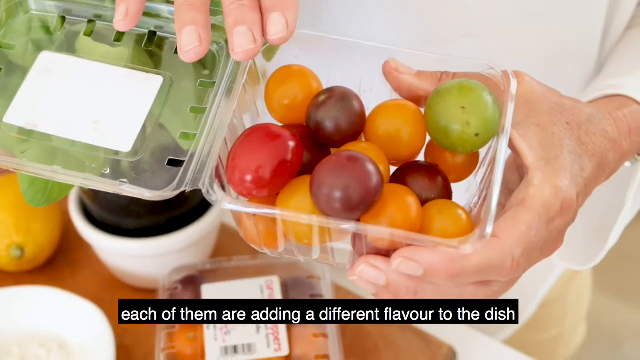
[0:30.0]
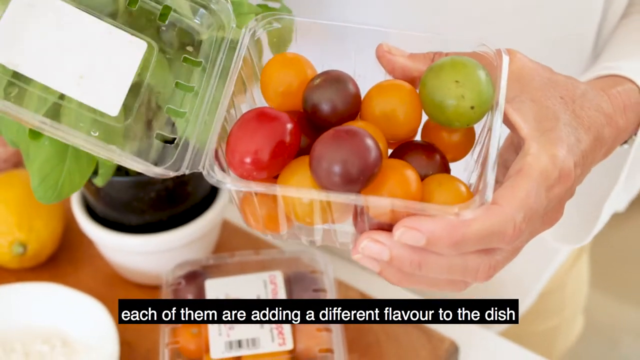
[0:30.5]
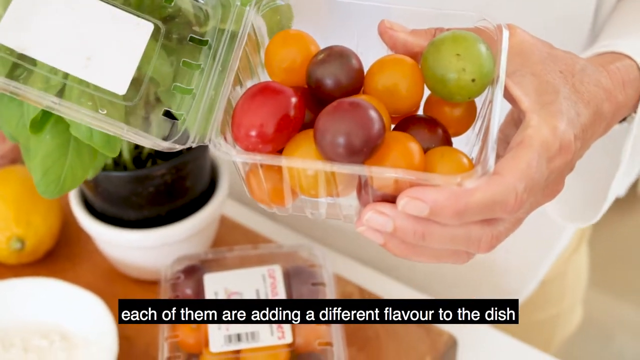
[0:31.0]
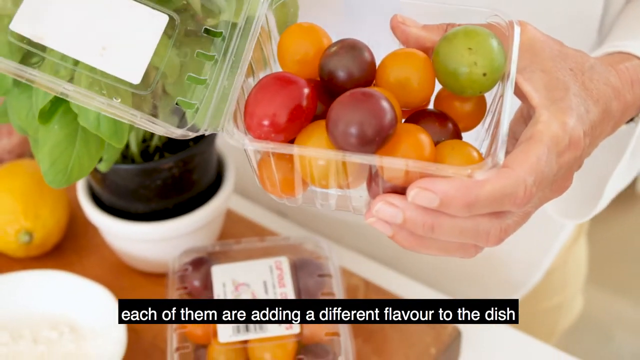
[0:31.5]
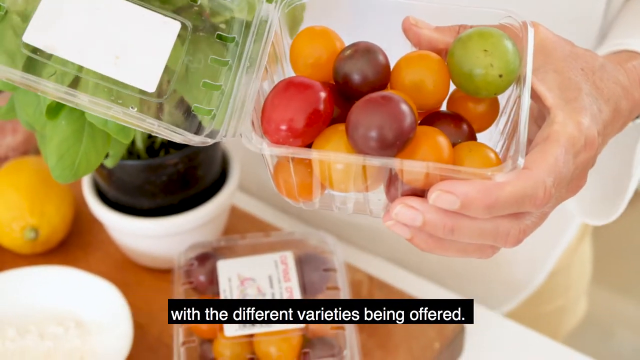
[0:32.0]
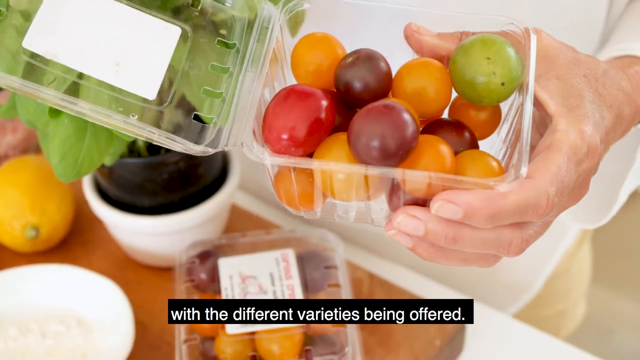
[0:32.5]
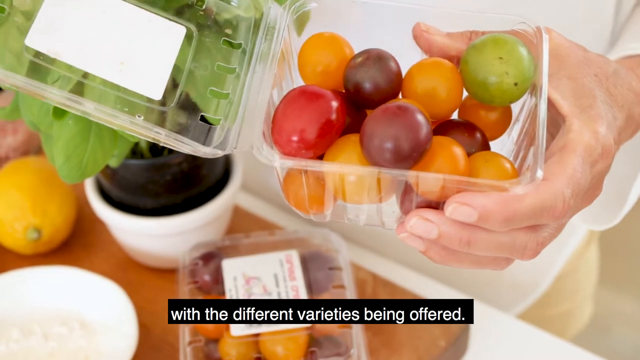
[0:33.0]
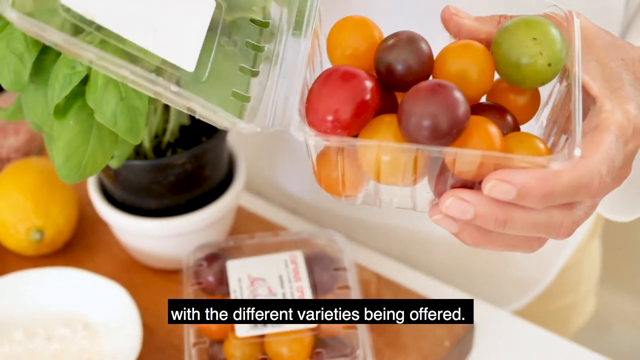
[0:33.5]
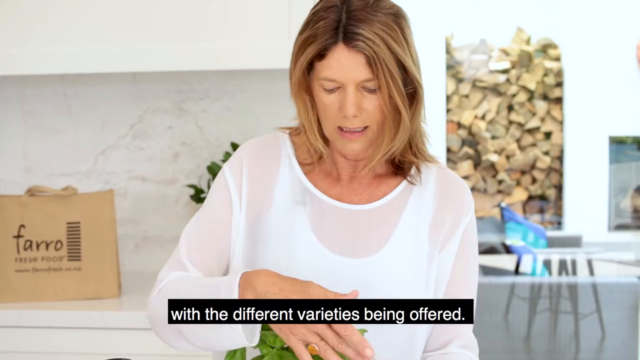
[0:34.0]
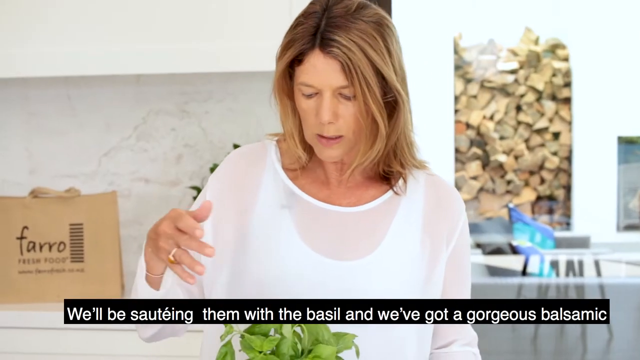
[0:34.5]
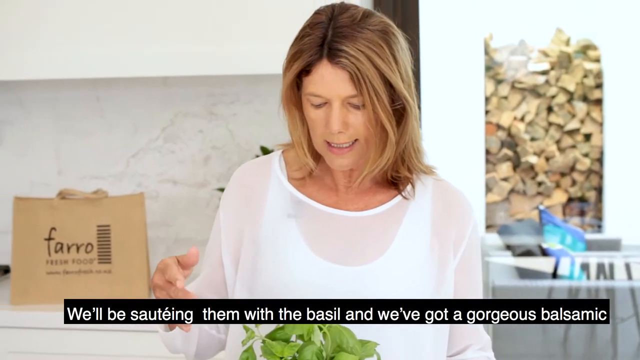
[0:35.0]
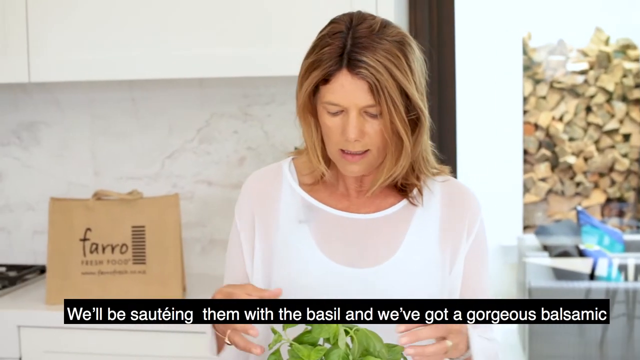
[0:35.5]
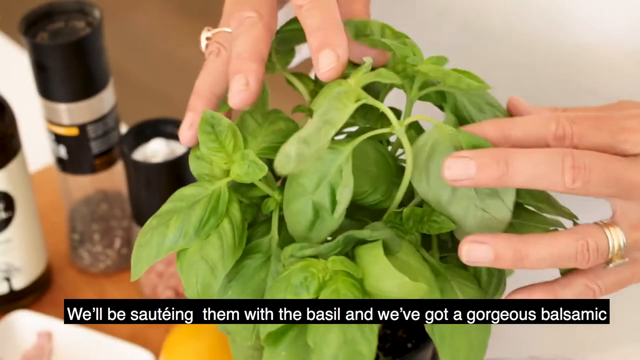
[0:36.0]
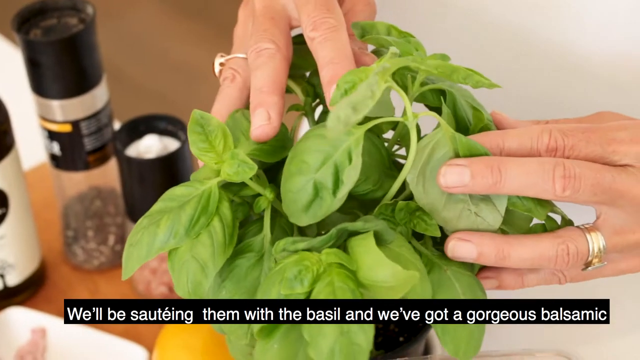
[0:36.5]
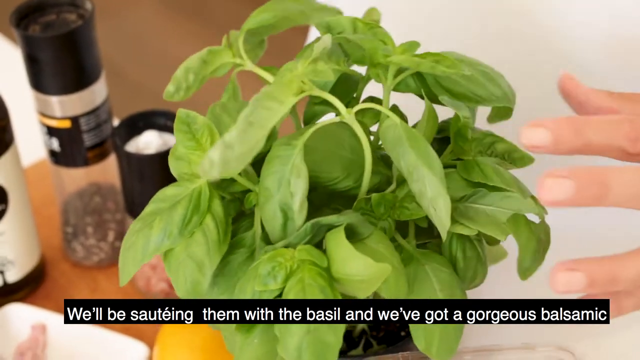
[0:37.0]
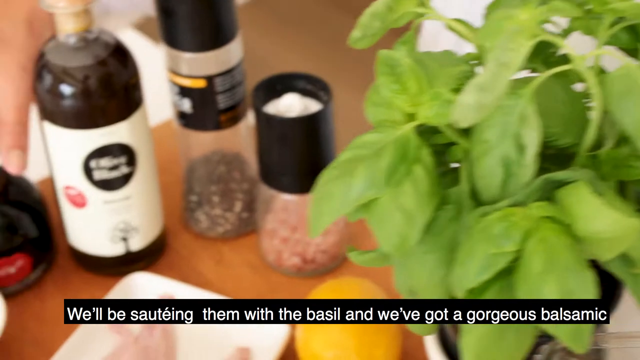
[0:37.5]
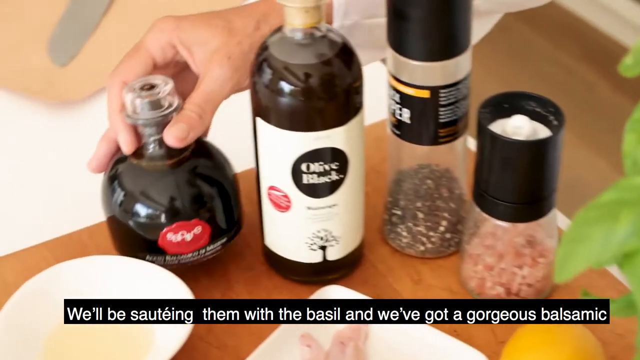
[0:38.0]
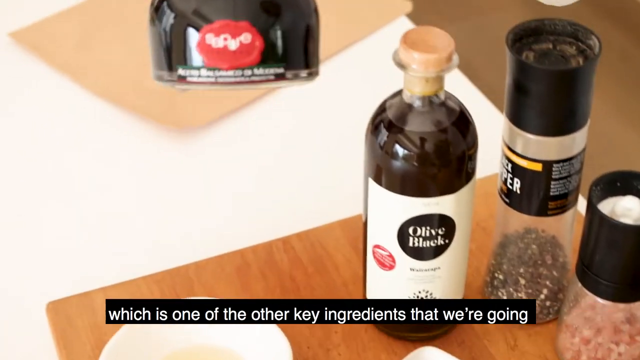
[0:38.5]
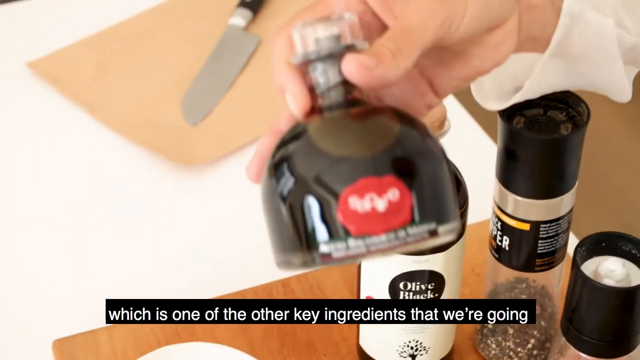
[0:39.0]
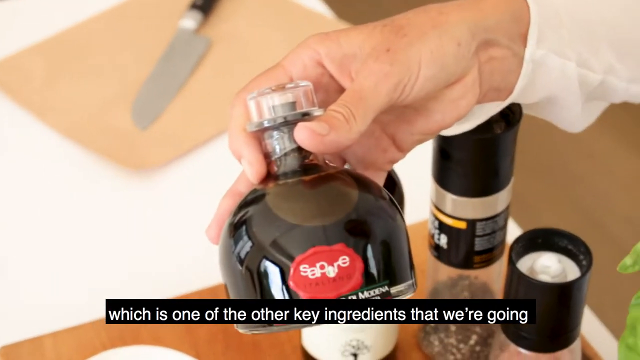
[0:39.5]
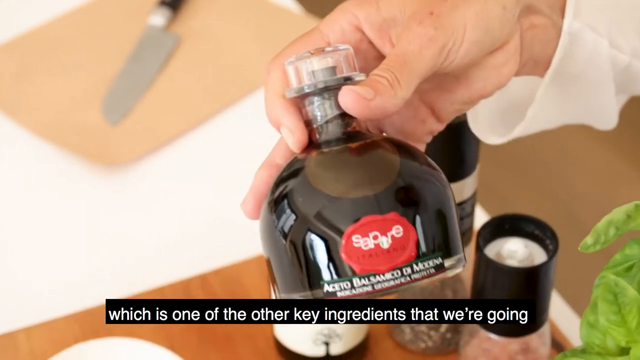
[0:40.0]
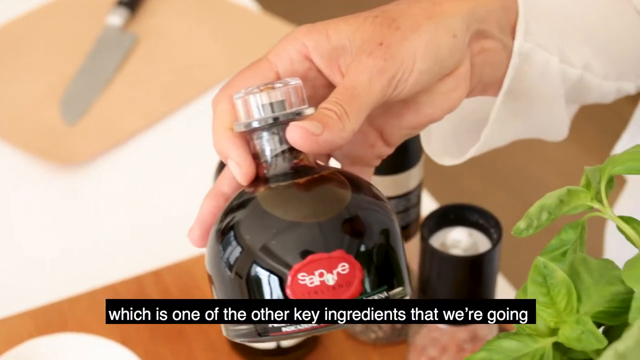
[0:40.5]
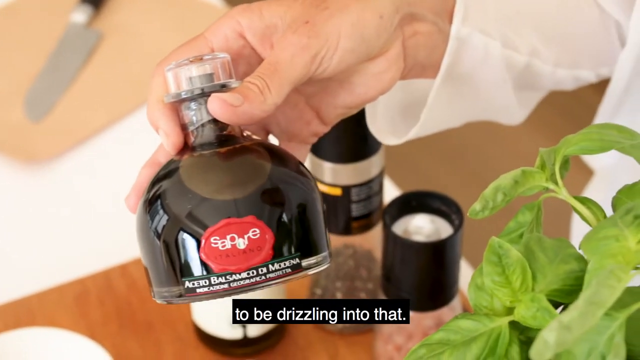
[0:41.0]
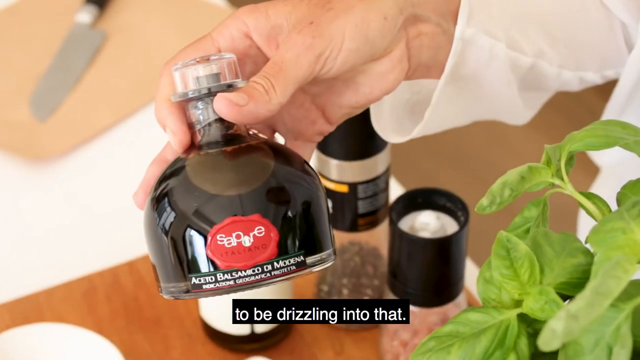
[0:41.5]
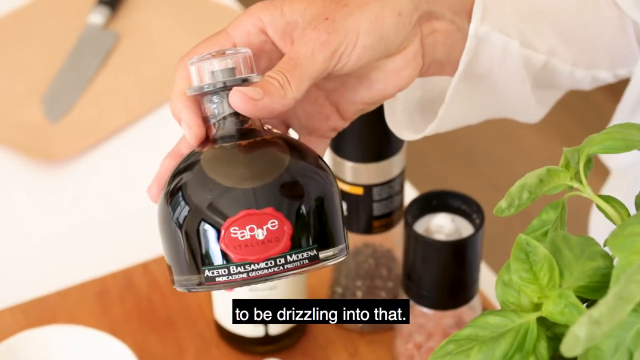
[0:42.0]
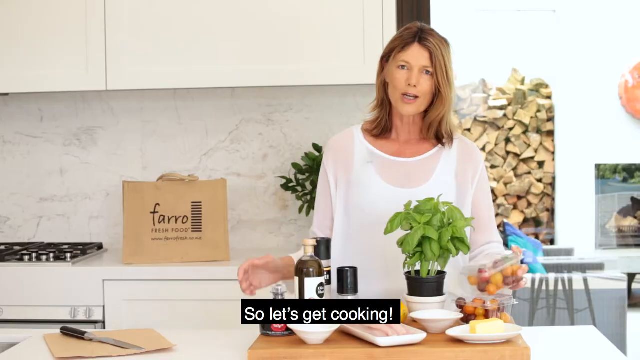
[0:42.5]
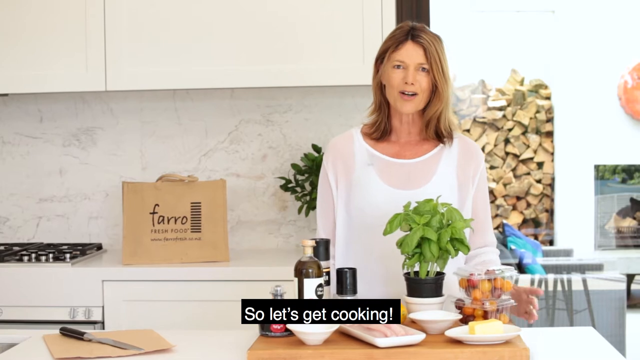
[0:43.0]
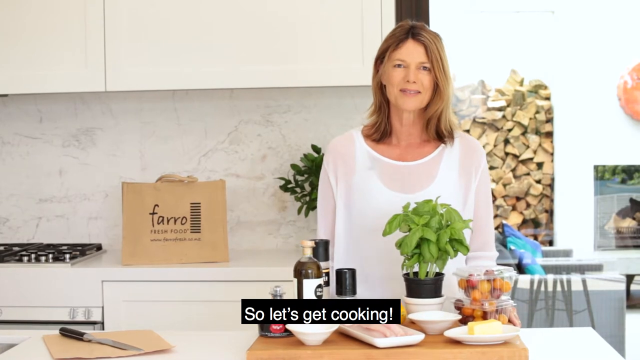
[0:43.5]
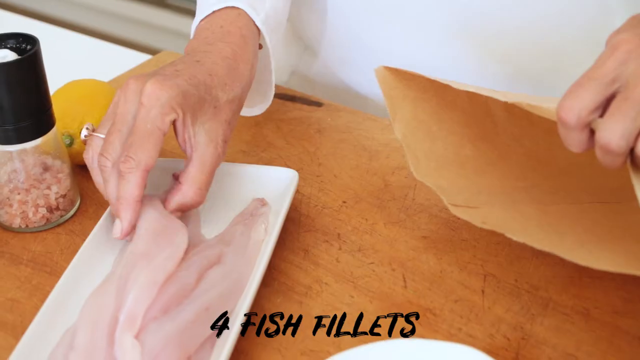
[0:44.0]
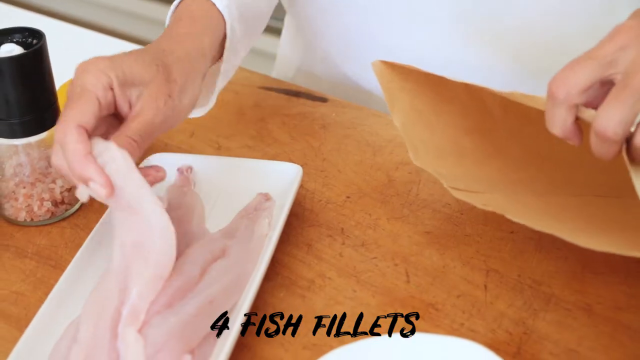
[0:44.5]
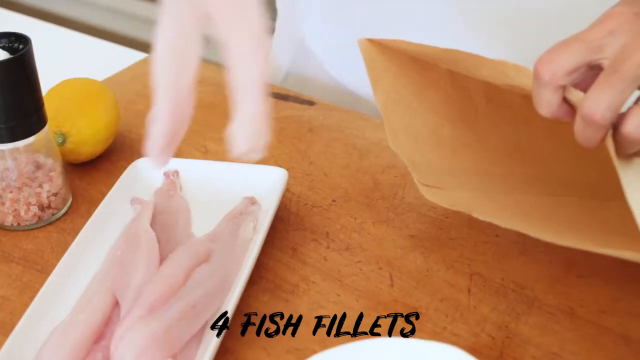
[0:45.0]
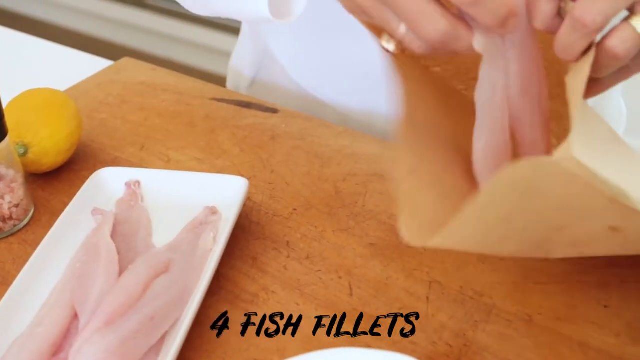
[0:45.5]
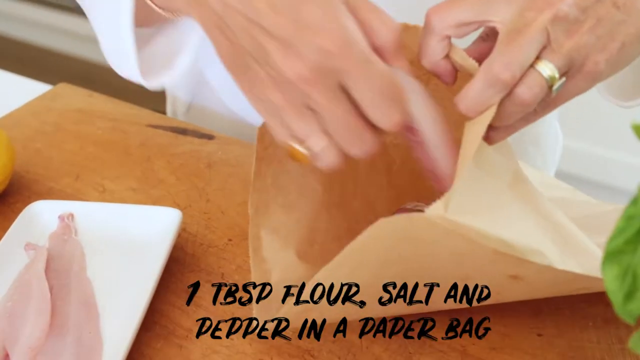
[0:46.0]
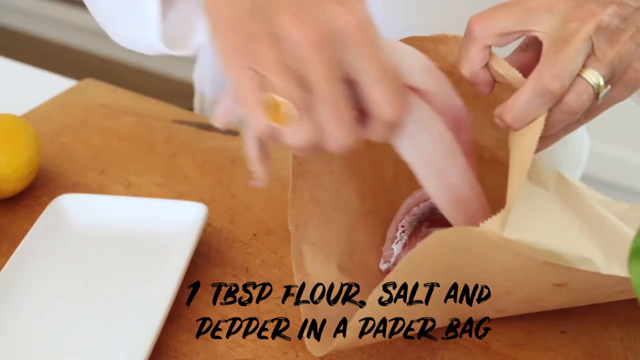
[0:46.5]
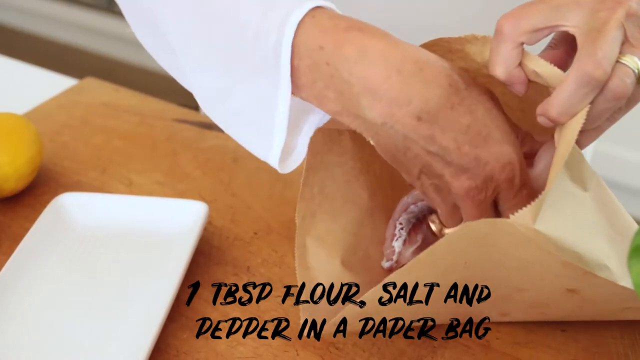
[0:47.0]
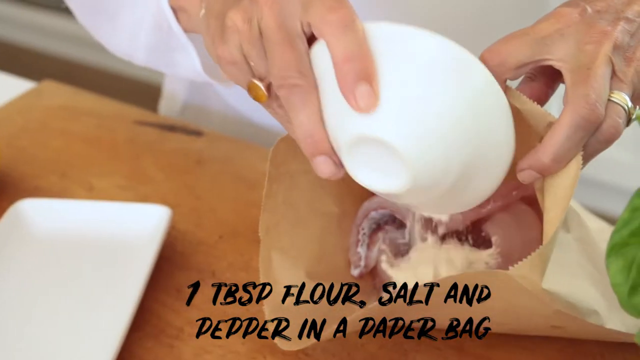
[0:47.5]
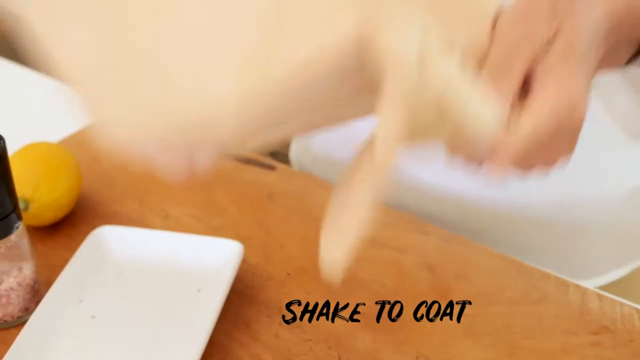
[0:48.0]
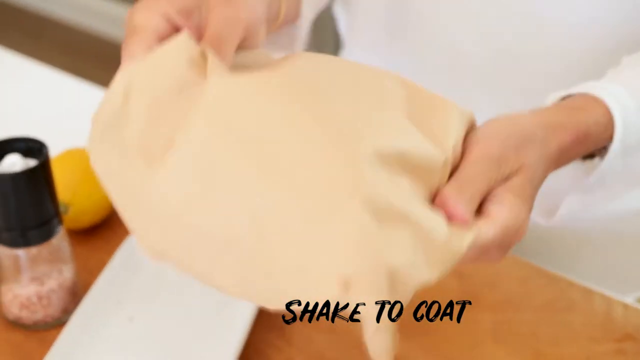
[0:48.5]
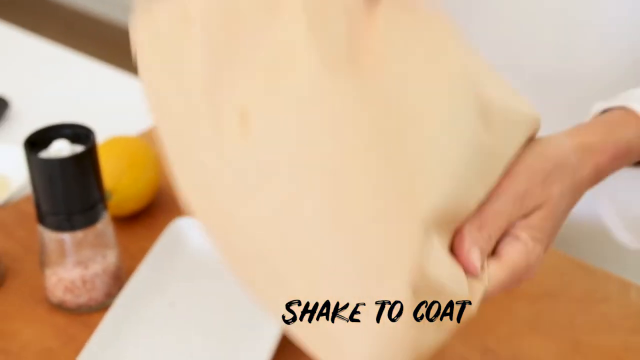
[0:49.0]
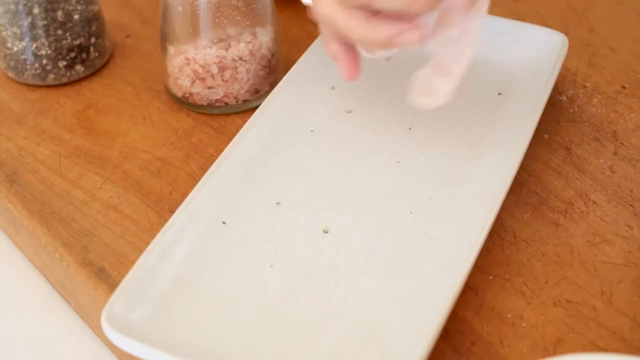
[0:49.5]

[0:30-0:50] Janine introduces the ingredients: a fish on a white plate, tomatoes, basil, a sauce for drizzling on a salad, and pink salt close to her. She takes the fish from the plate, places it inside a brown bag, and adds ingredients to coat it. She closes the brown bag and shakes it so the fish gets coated, and once the fish fillets are coated with flour and salt, she leaves them on the brown paper.